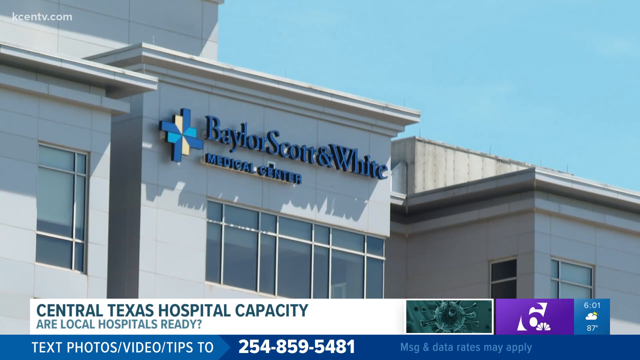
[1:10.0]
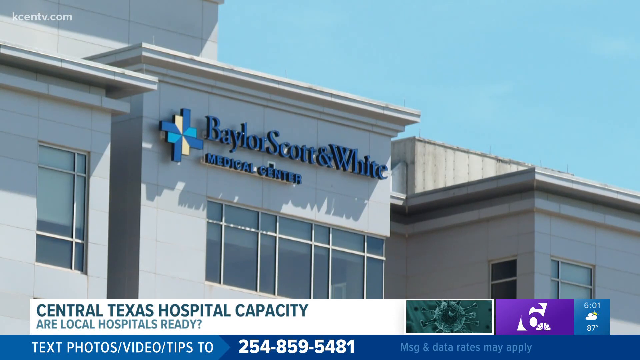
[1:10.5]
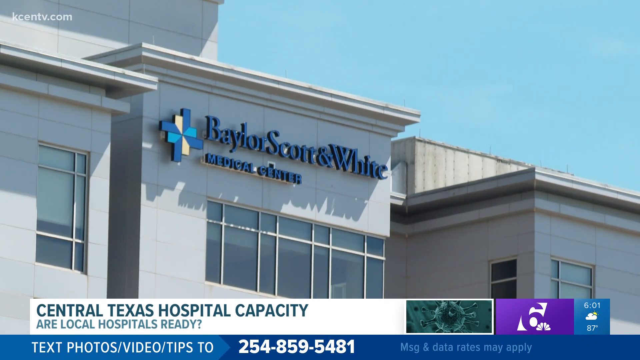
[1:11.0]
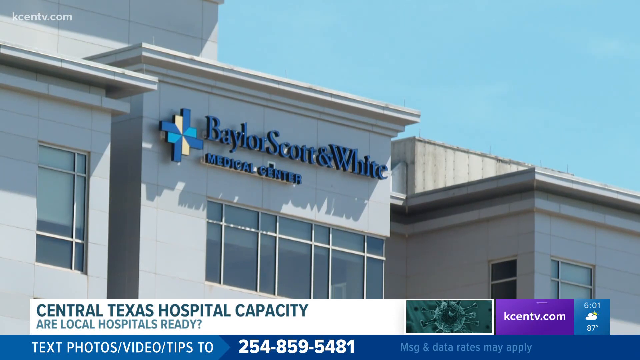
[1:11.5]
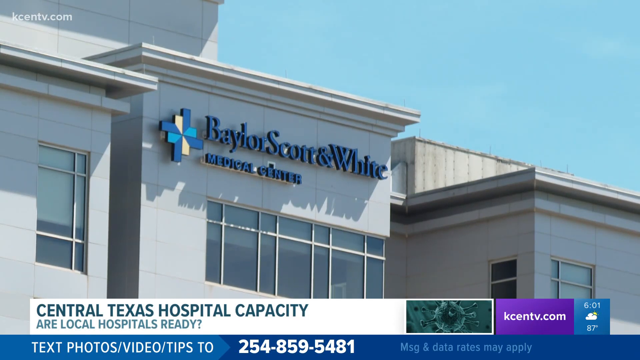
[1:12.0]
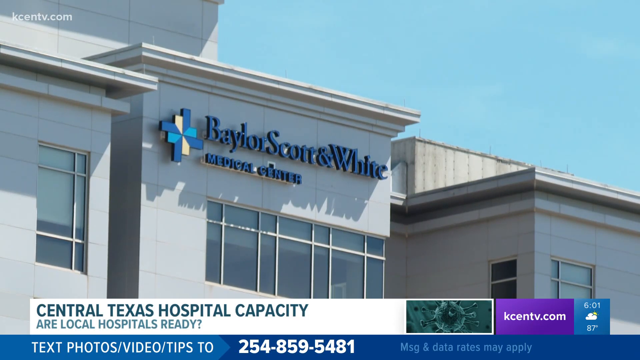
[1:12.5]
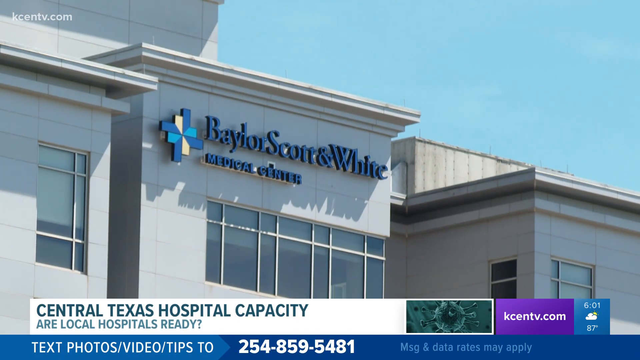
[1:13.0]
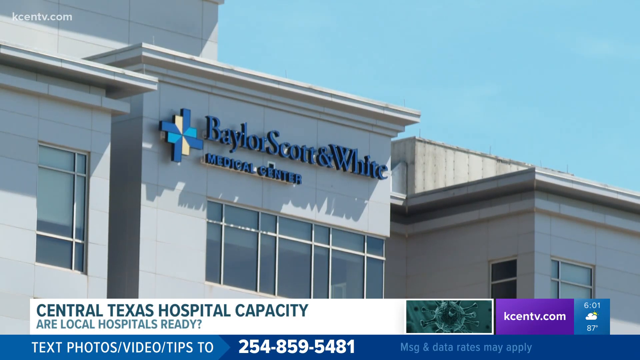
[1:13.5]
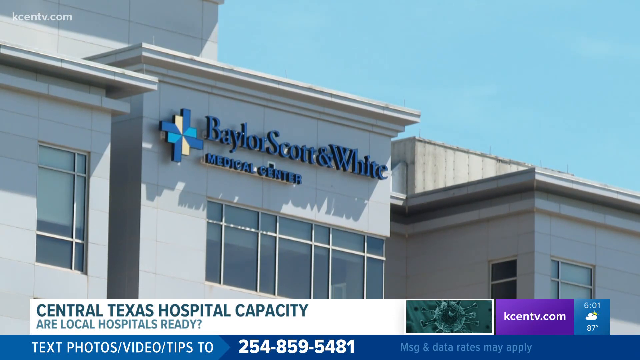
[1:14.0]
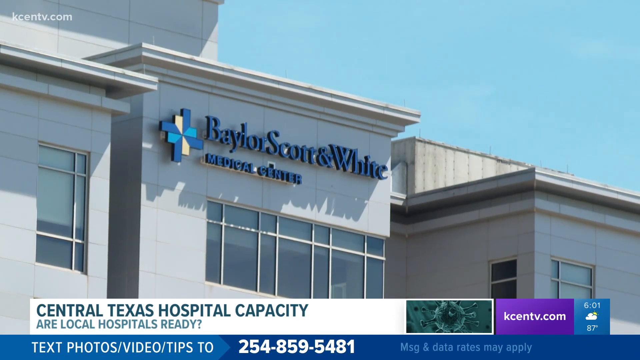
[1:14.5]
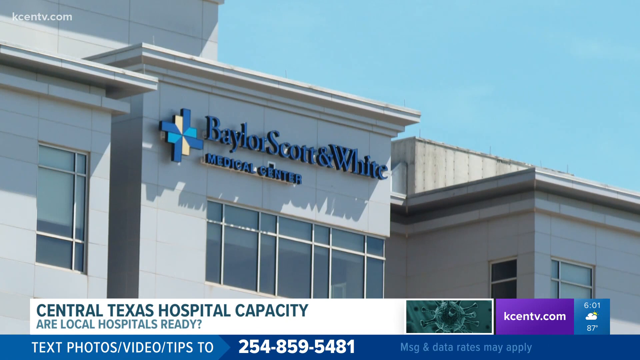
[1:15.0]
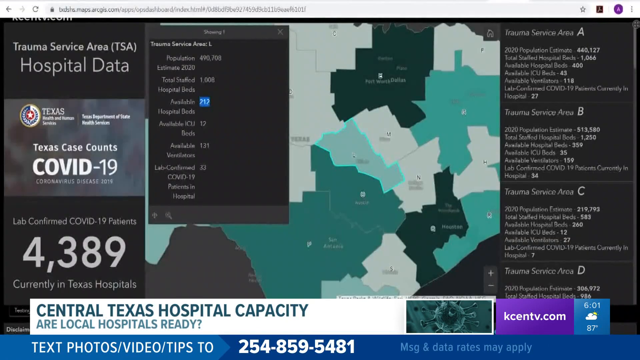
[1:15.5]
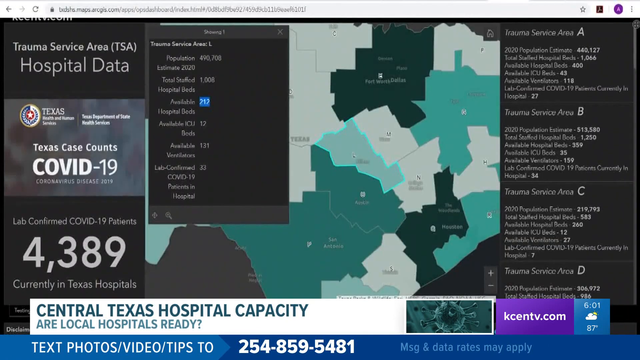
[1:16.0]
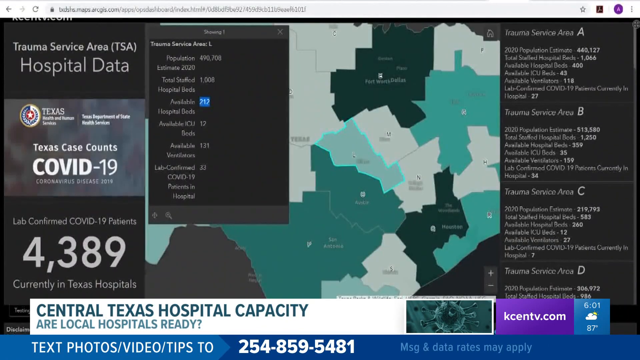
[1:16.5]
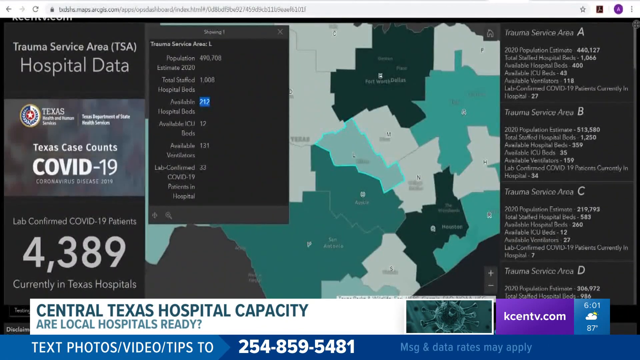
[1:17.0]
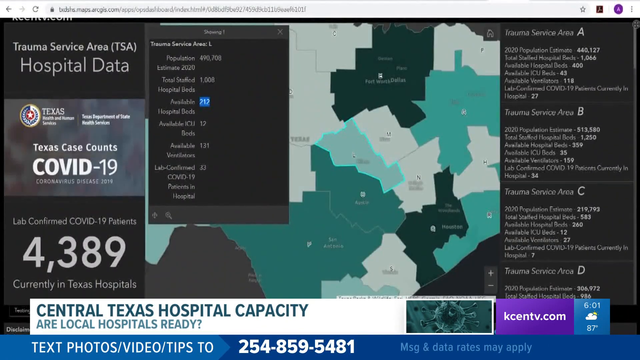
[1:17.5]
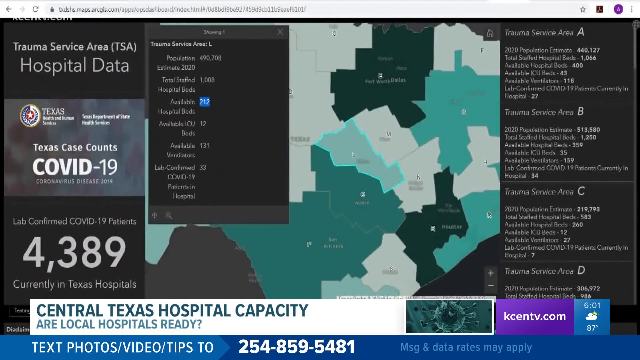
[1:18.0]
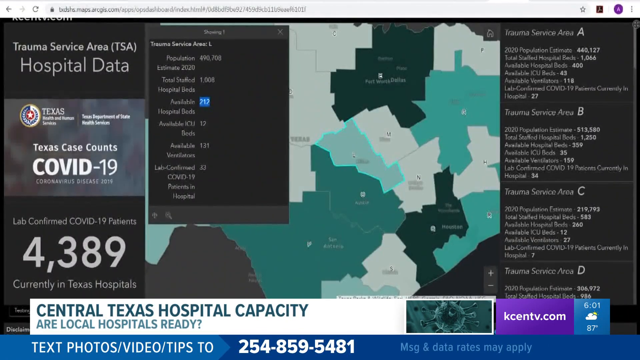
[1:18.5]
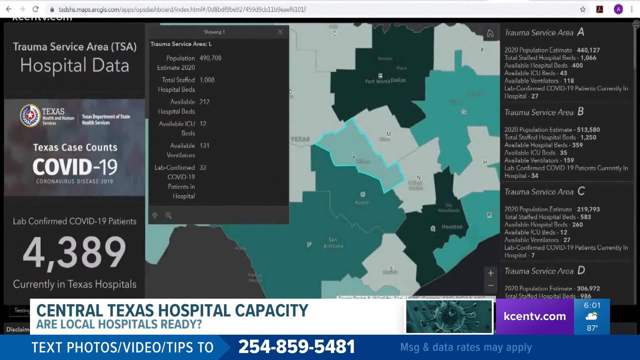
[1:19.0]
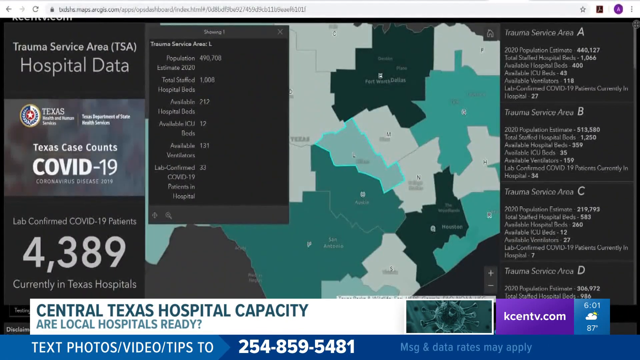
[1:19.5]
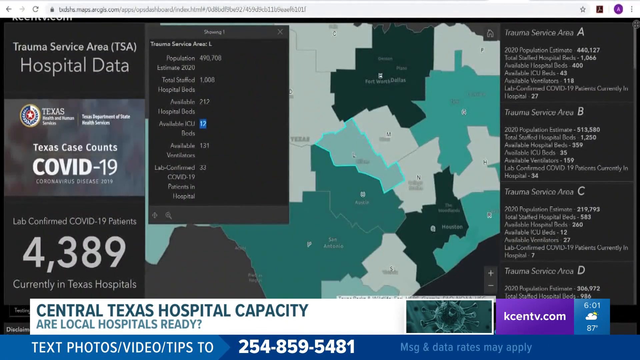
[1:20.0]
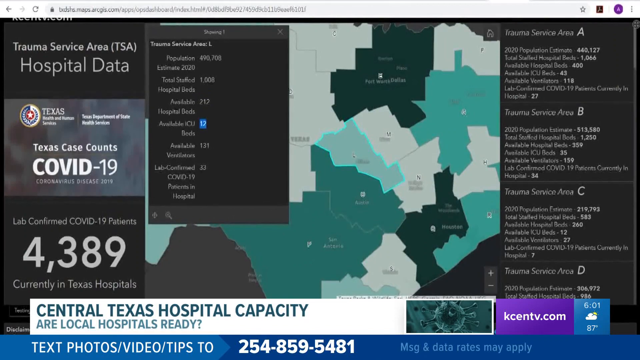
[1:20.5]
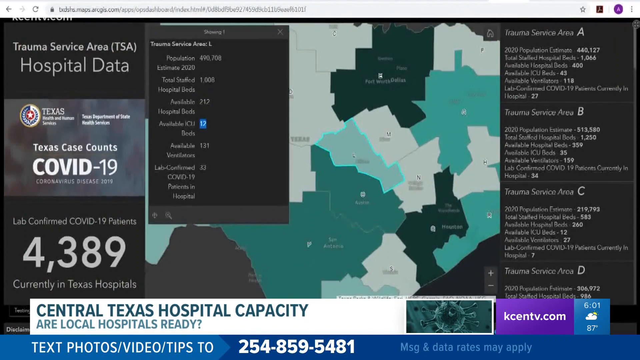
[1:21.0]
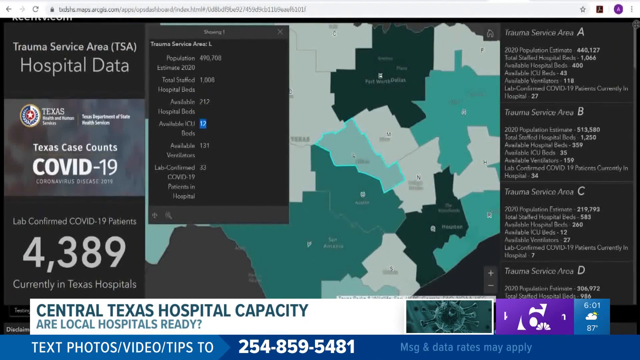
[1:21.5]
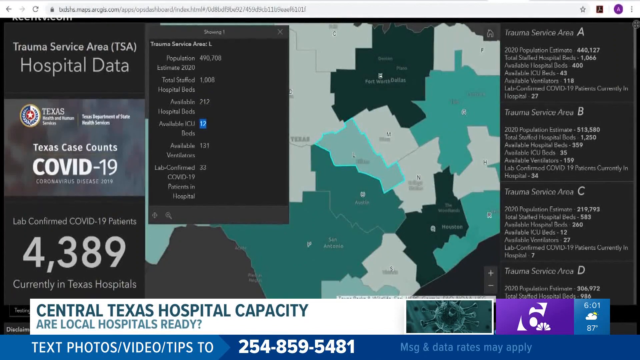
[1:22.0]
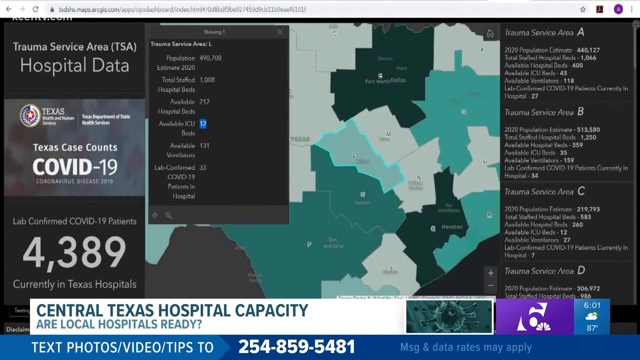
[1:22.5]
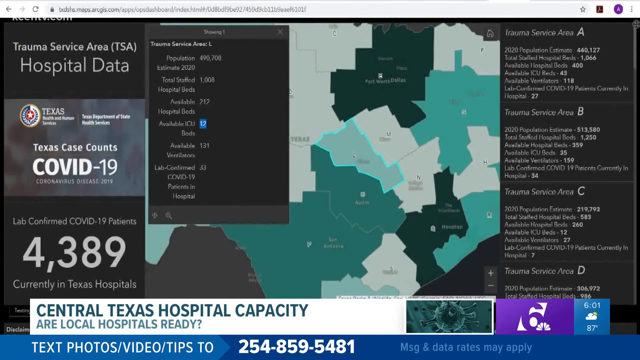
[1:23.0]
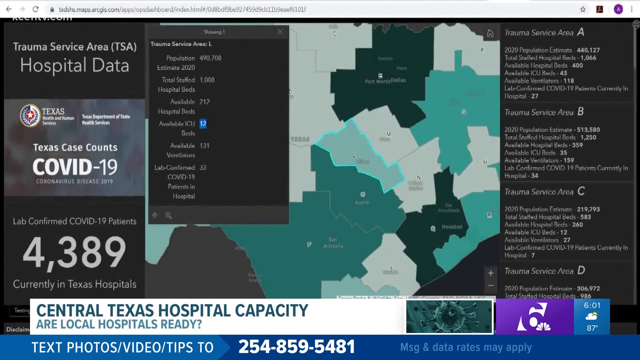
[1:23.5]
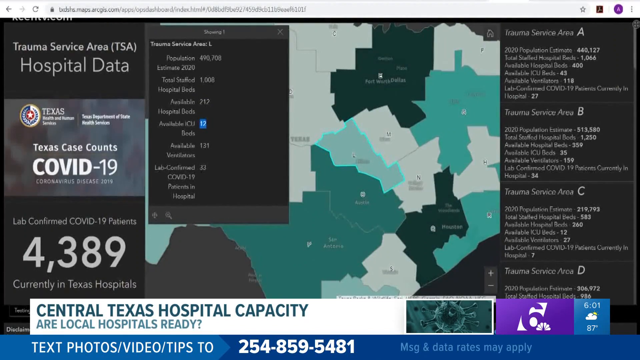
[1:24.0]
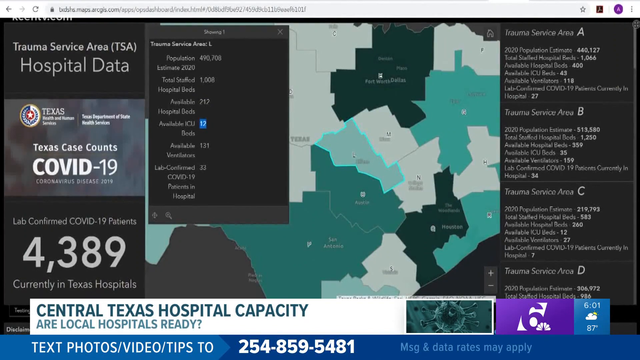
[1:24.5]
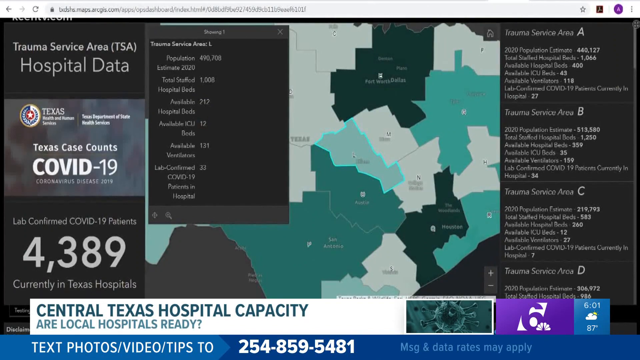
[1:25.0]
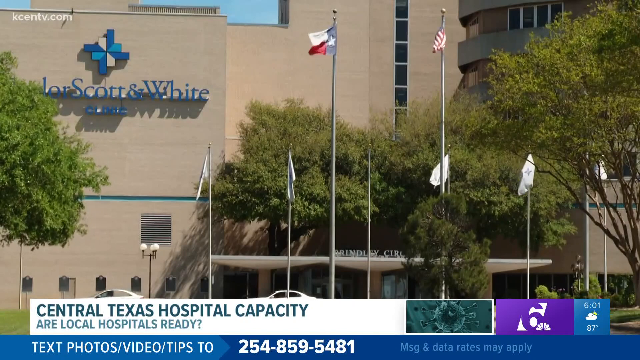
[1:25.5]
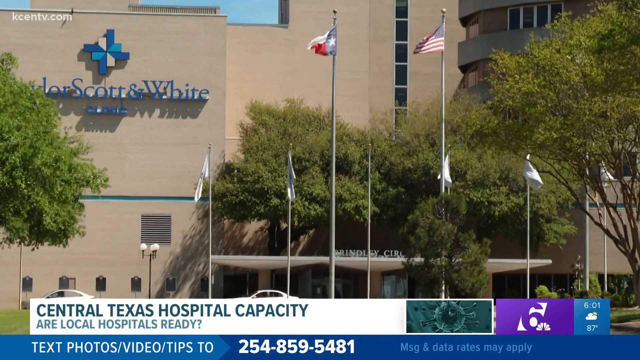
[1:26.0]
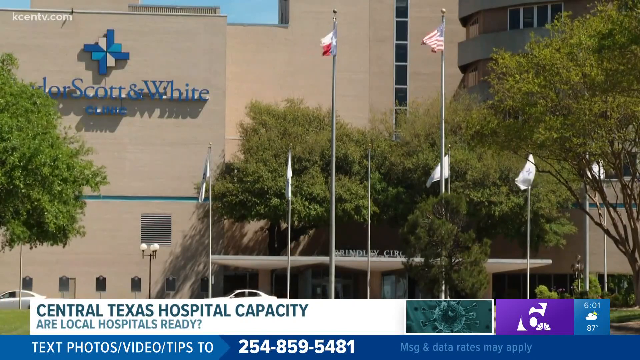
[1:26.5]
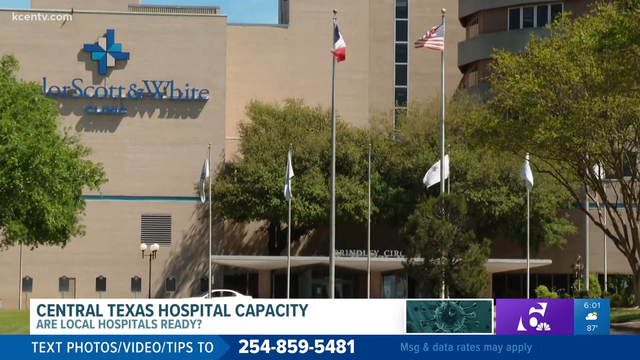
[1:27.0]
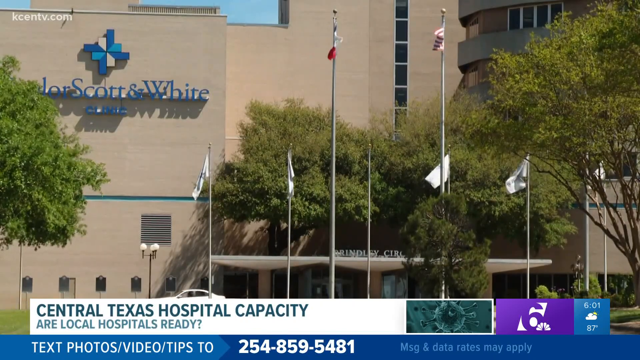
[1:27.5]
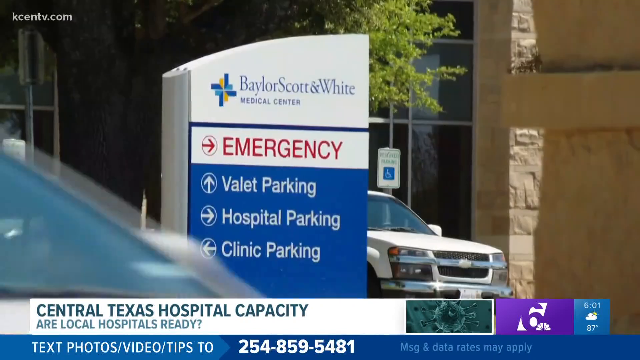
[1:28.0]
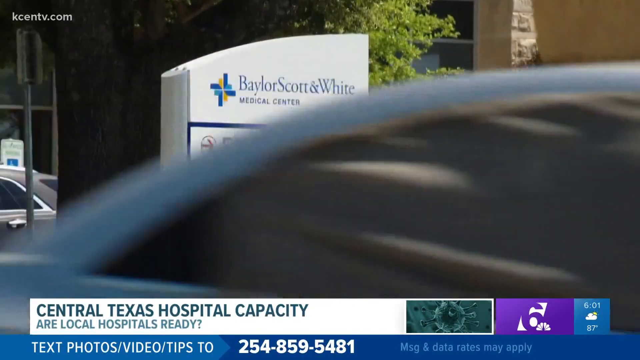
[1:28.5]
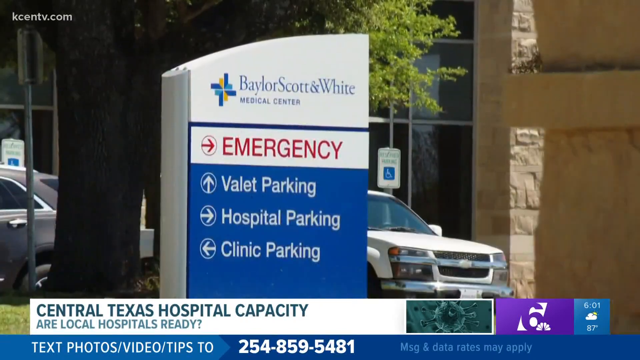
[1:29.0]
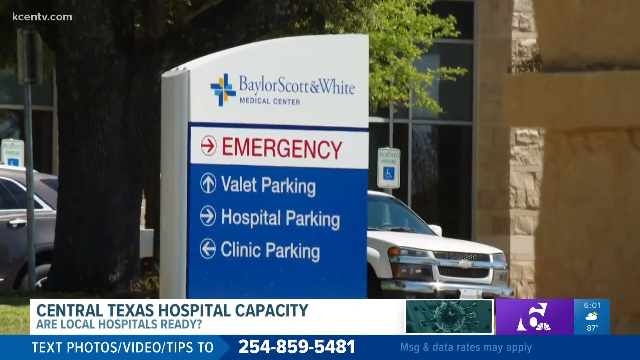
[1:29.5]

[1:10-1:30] Part of the outside of the medical center shows "Baylor Scott and White" in blue lettering with a blue cross next to it. The video then appears to return to the map of Texas with the hospital data. Another shot of Baylor Scott and White Hospital follows; where the building earlier in this stretch was mostly cream-colored, this area is a light brown color. In front of the facility are flags: the American flag and several others, one possibly the Texas flag, flying as high as the American flag, plus some small flags flying a little lower. The parking area of the hospital appears briefly, with signs for the emergency room and different departments, such as valet parking, hospital parking and clinical parking. Some traffic is visible, mostly the tops of vehicles driving around the center. Everything takes place outside and looks bright, probably early in the morning.